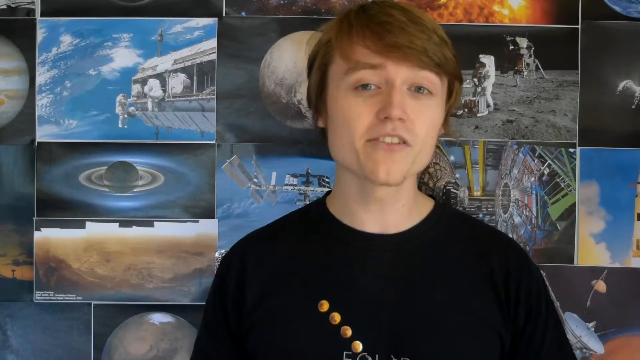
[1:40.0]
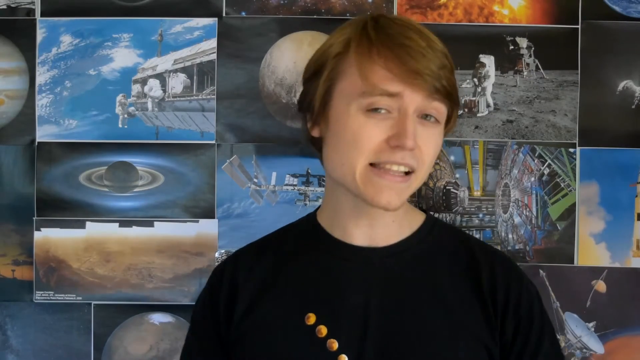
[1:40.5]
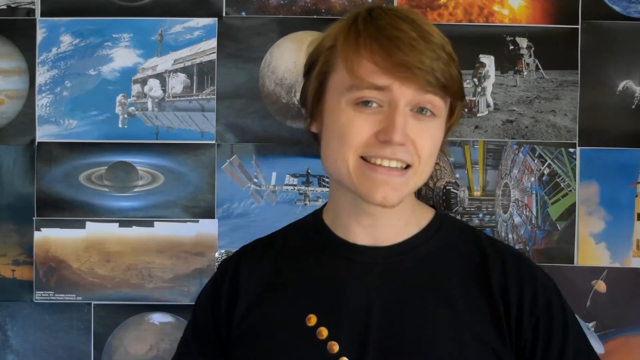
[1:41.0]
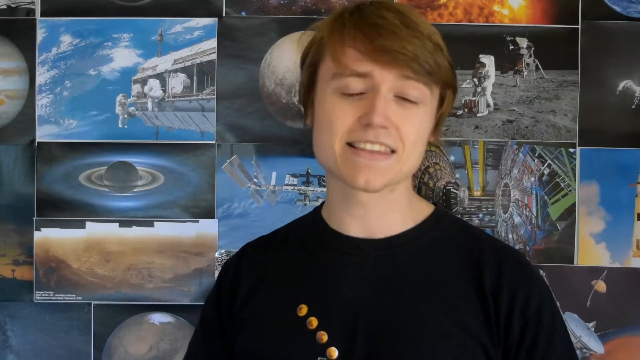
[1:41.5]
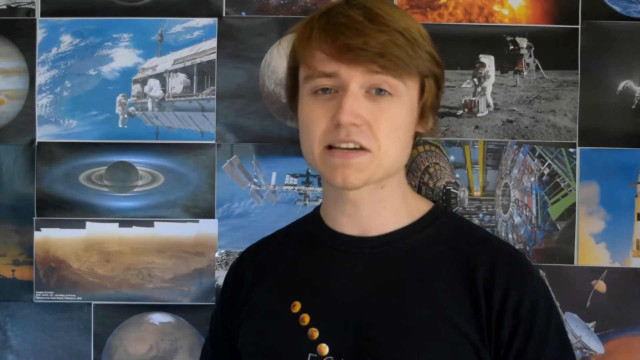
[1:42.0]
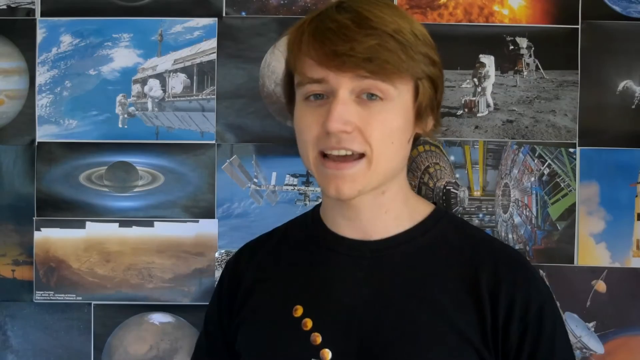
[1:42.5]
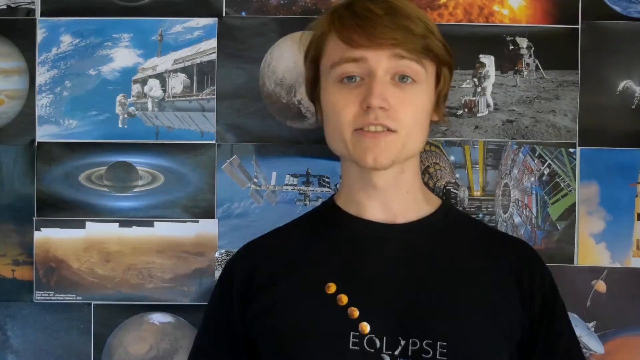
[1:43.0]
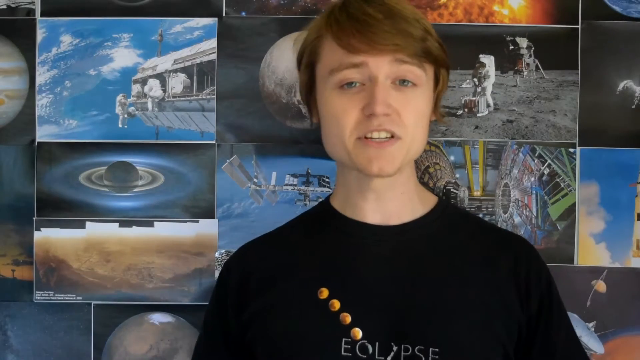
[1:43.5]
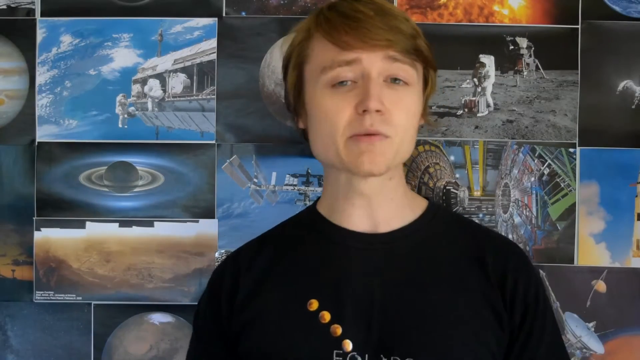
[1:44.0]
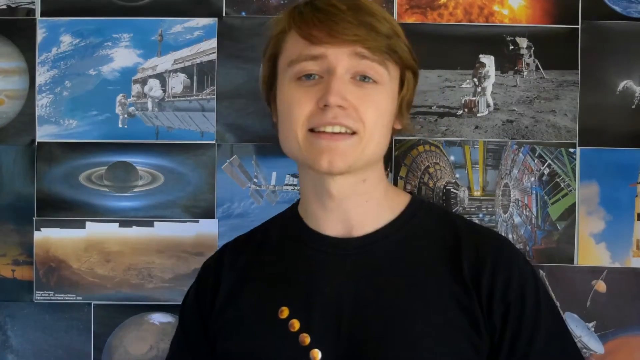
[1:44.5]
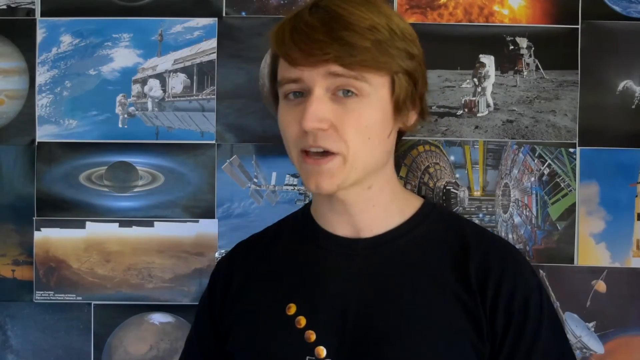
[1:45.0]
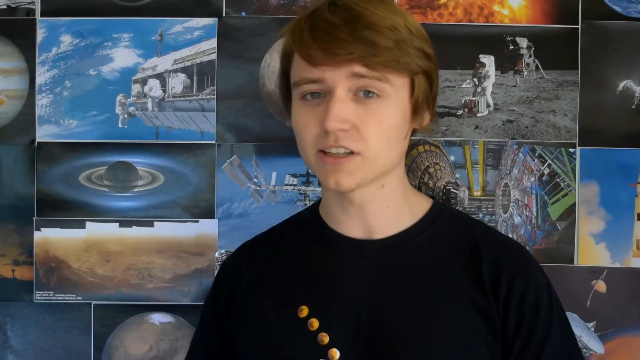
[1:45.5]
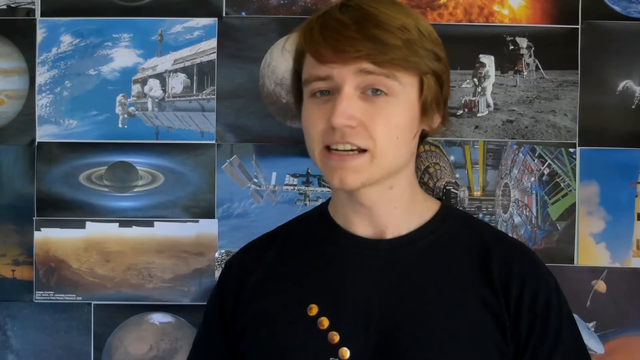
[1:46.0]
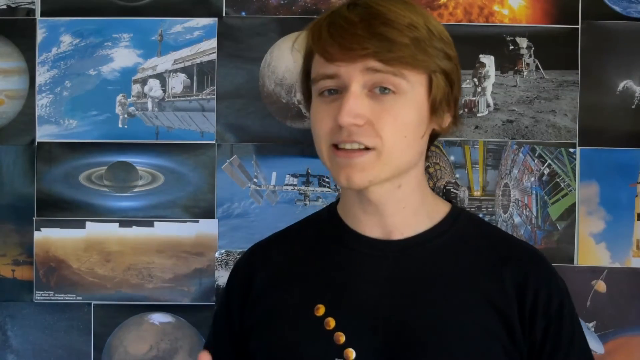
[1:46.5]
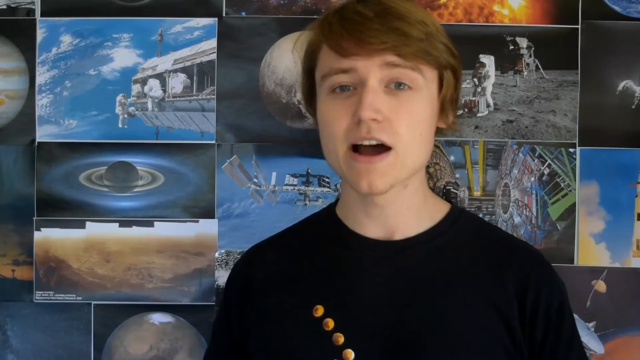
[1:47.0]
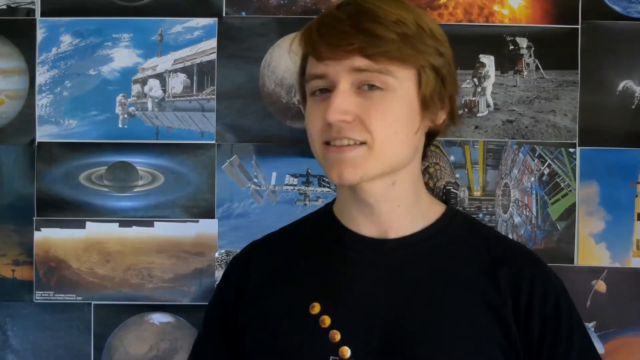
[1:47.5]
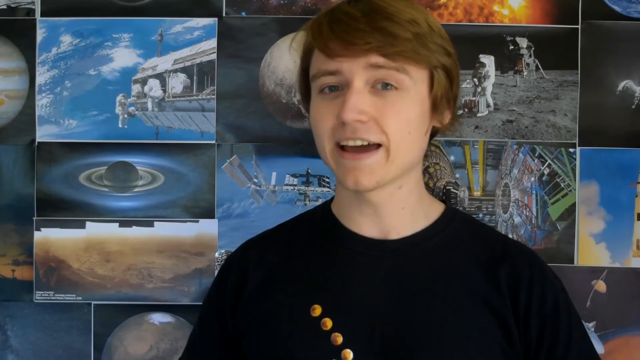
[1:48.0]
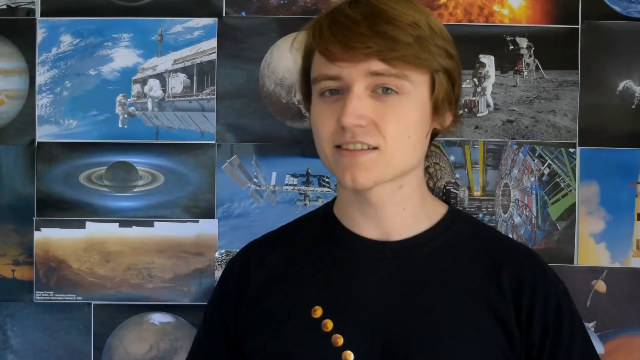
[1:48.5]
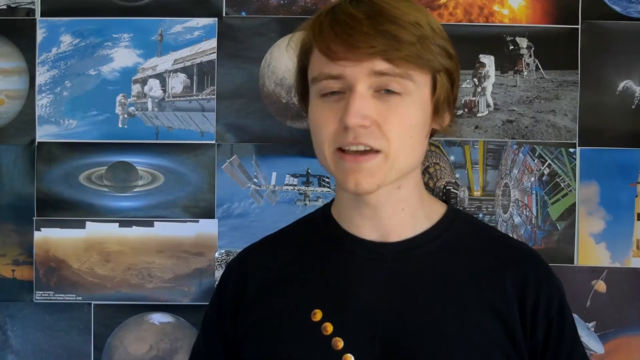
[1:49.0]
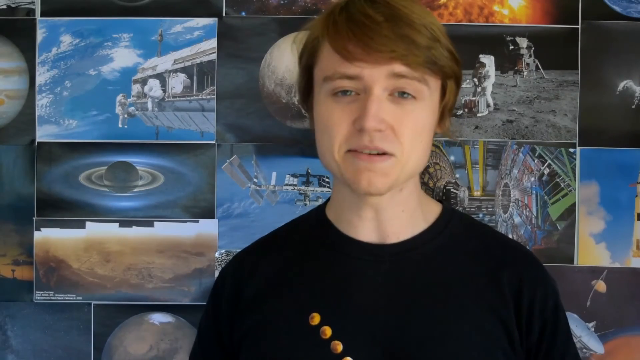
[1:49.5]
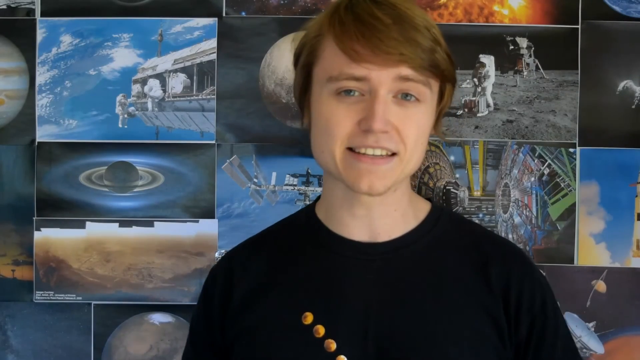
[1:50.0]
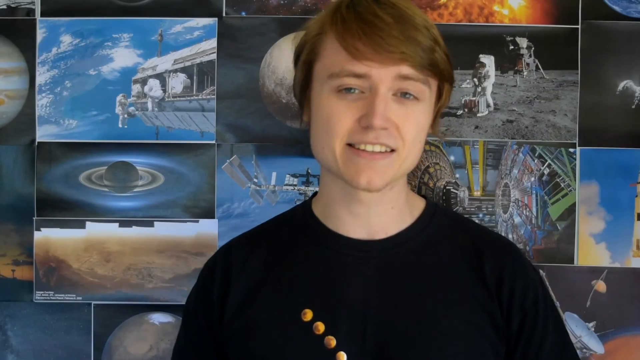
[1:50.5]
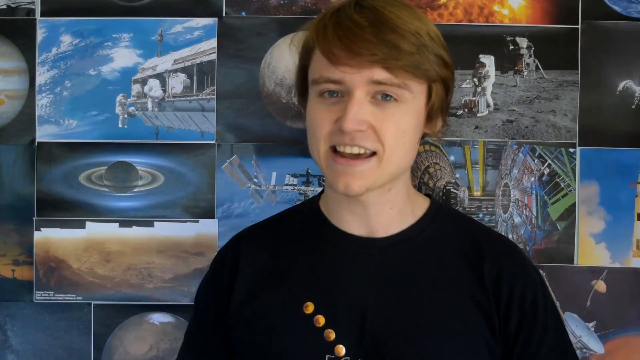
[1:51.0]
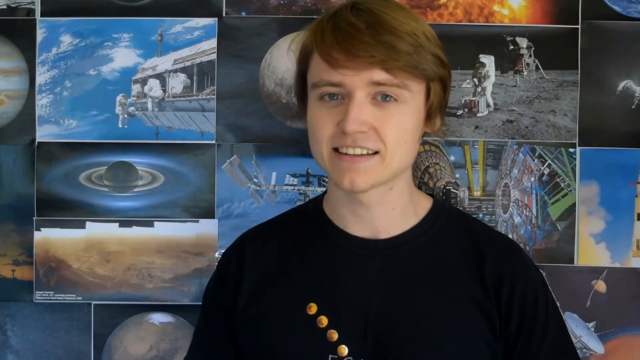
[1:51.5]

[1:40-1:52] The boy is talking, and the scene behind him seems to be related to aerospace.